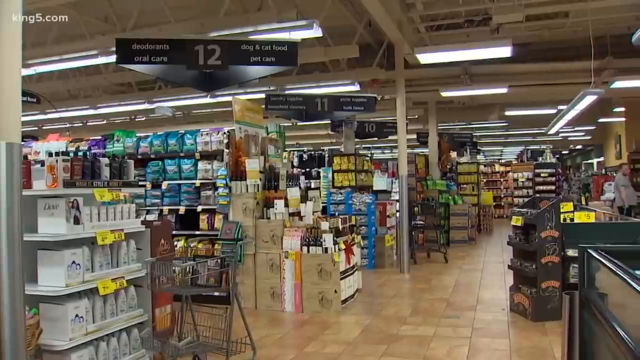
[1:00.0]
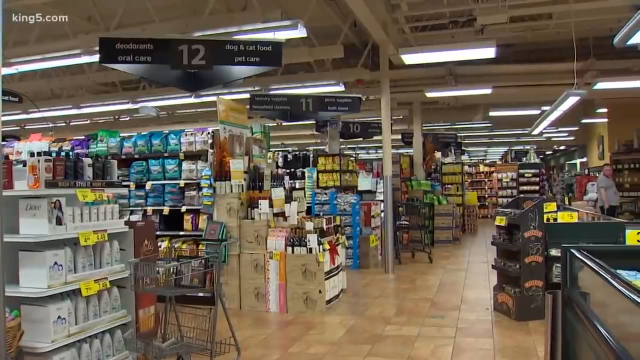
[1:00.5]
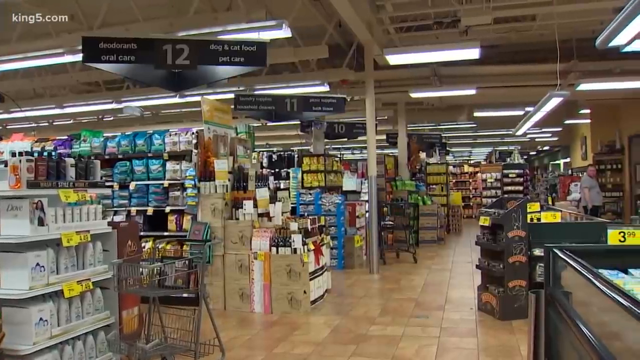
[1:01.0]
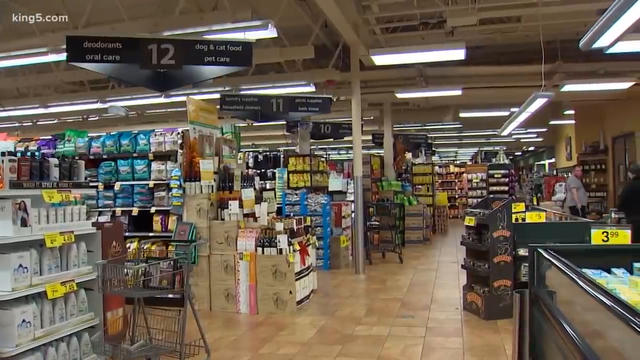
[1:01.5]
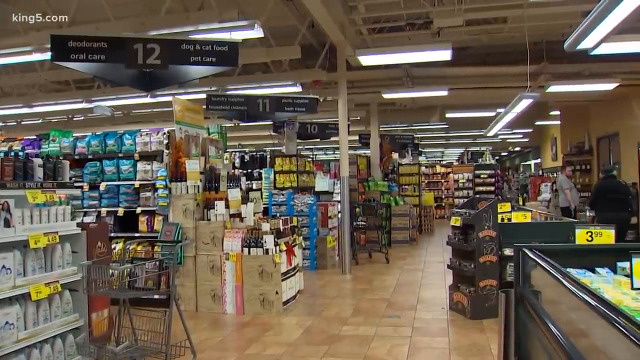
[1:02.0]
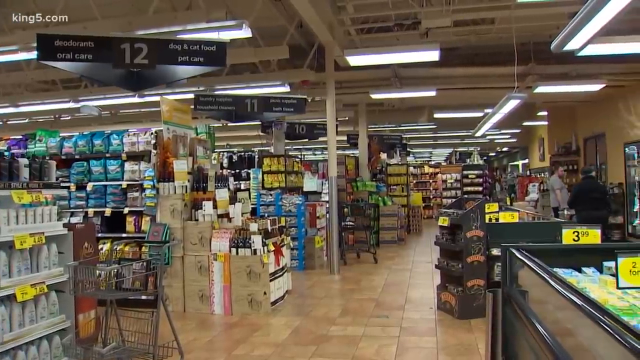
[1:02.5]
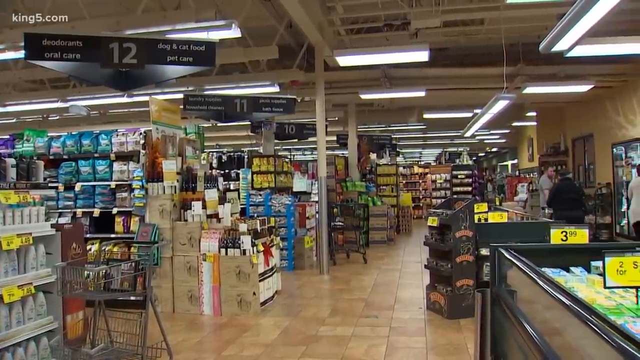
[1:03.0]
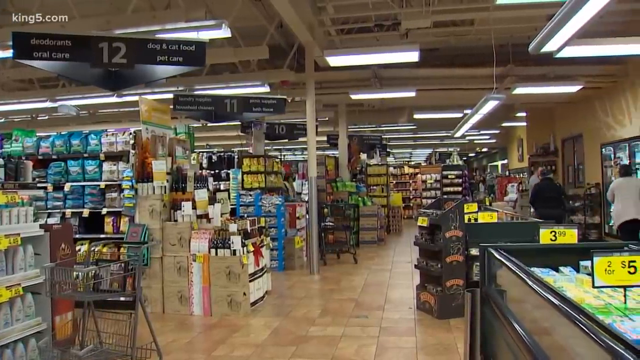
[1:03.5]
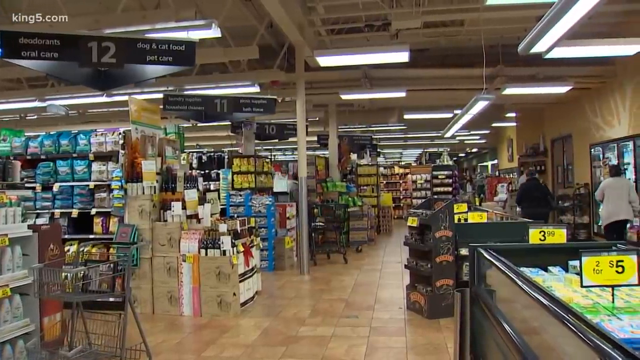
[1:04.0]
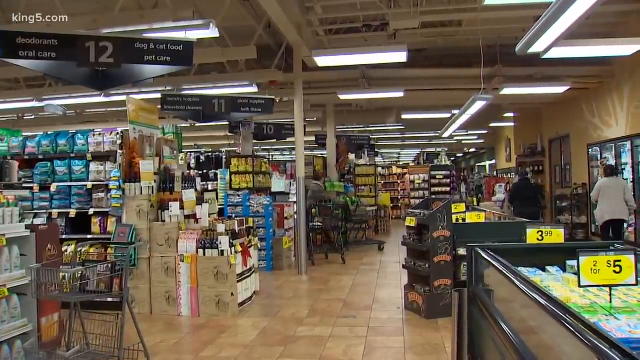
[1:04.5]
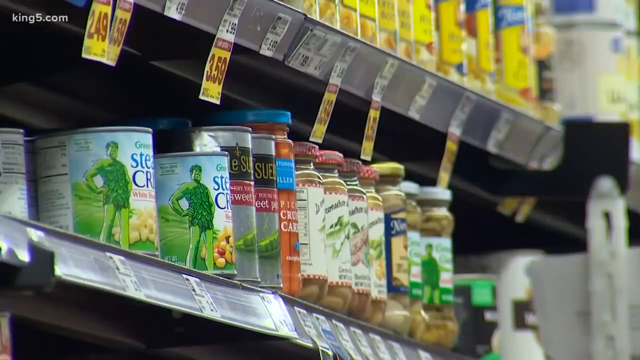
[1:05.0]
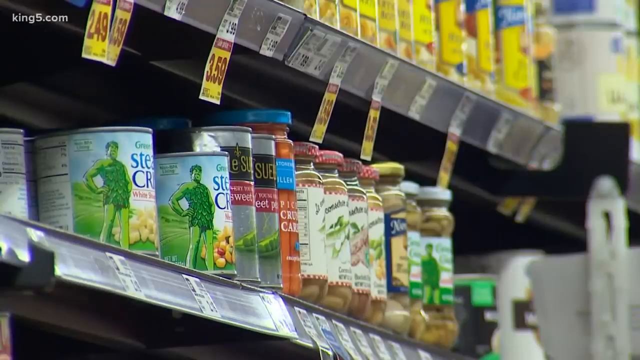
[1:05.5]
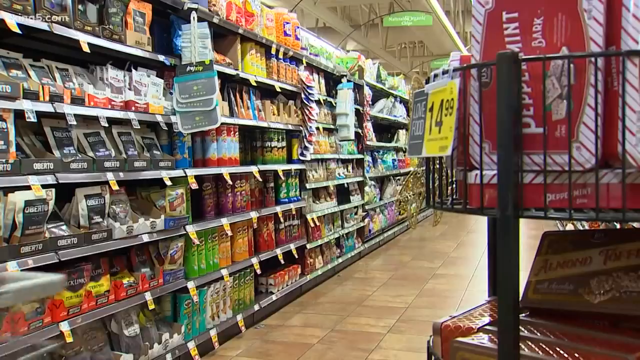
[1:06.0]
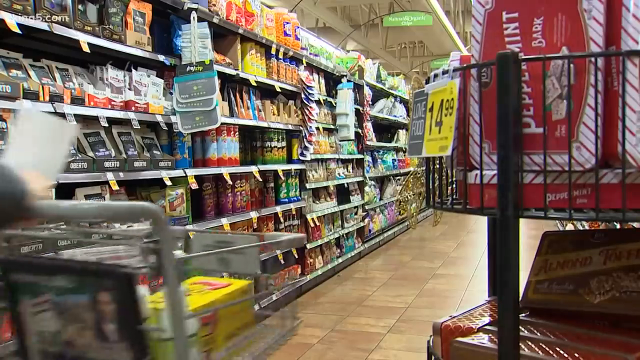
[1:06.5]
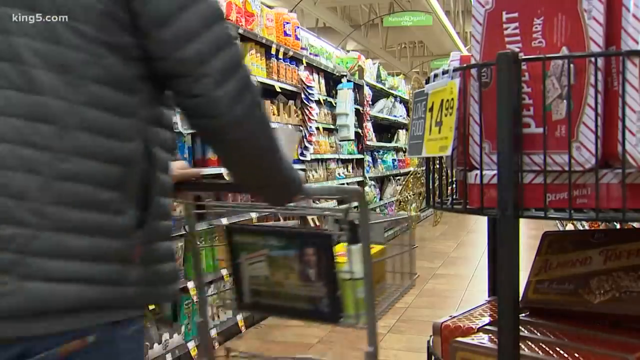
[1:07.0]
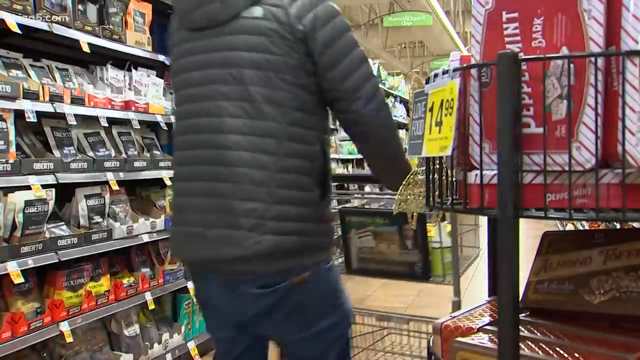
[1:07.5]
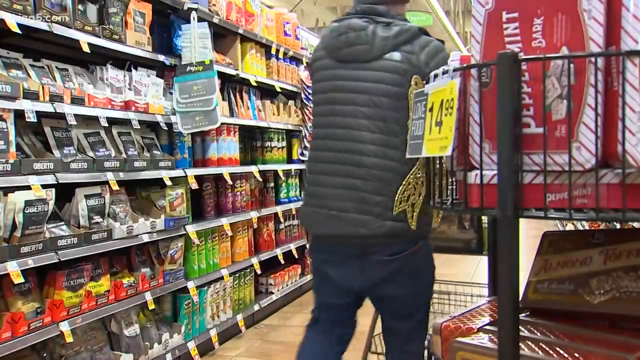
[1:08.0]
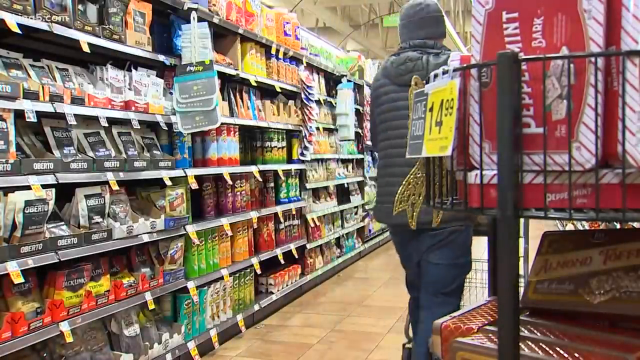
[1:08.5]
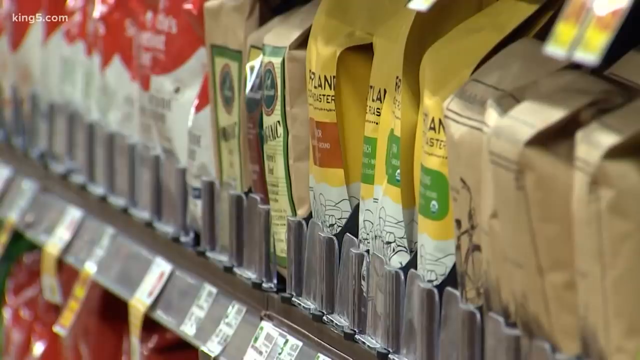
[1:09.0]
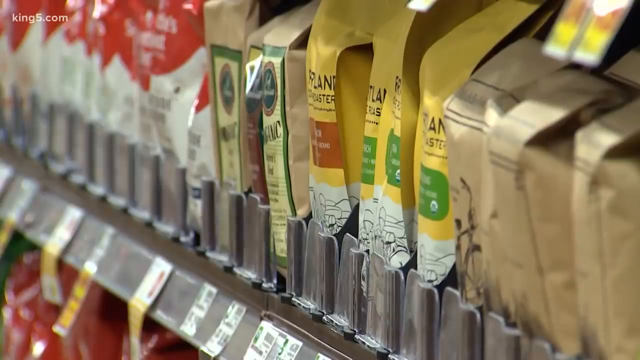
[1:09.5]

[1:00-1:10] The camera continues panning to the right as some shoppers move out of the frame and out of the aisles. A very quick cut shows close-ups of jars and cans of corn and other foods, taken at an angle so the side of most of the jars is visible. In another aisle, somebody in a black puffy jacket walks by very fast with a shopping cart. Then there is a close-up of more products, shown from a side angle.